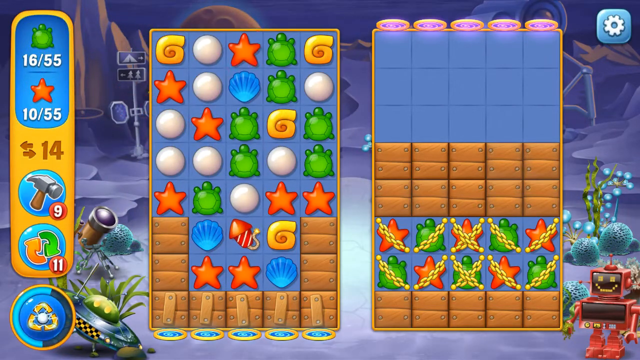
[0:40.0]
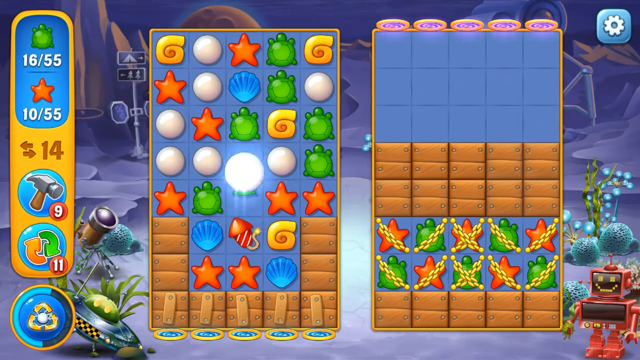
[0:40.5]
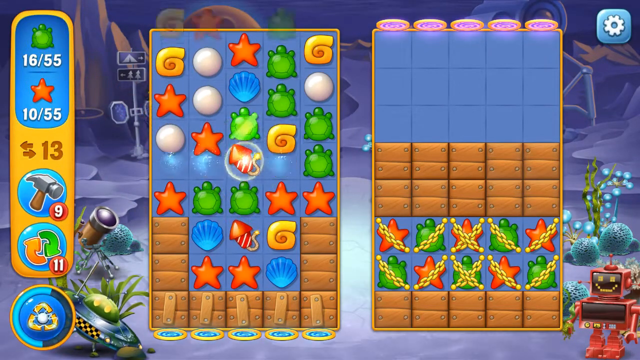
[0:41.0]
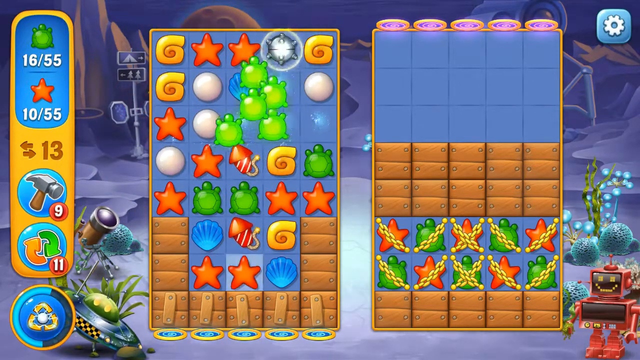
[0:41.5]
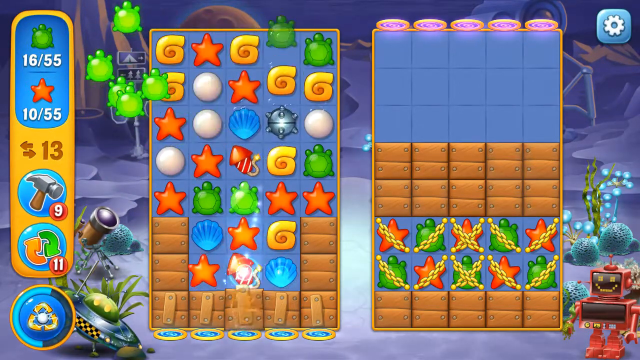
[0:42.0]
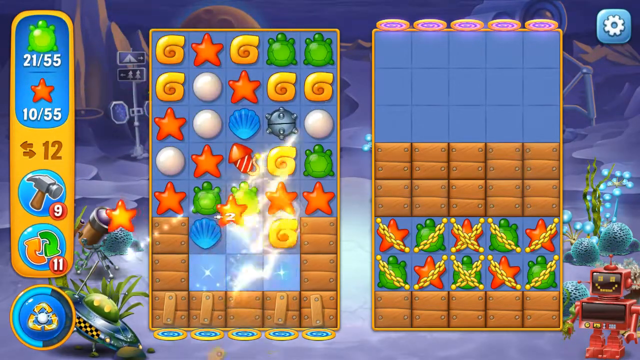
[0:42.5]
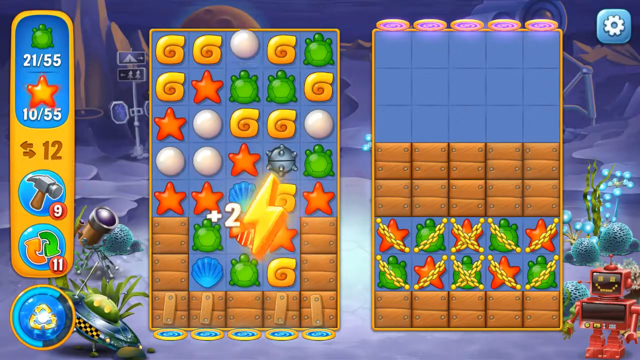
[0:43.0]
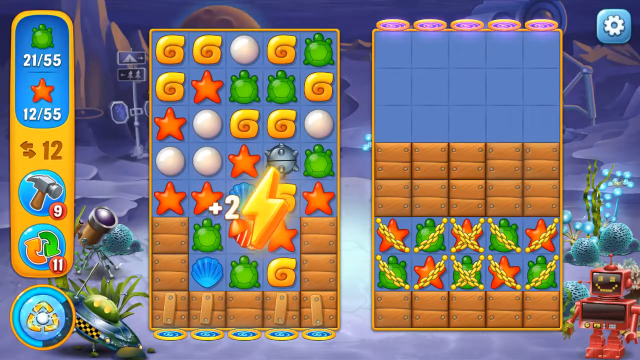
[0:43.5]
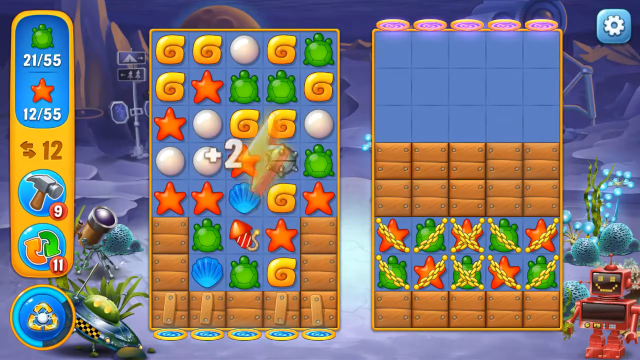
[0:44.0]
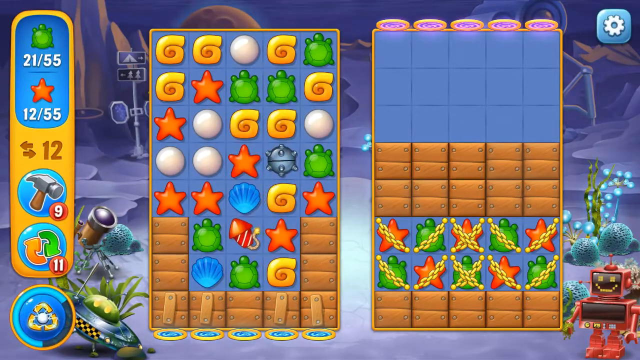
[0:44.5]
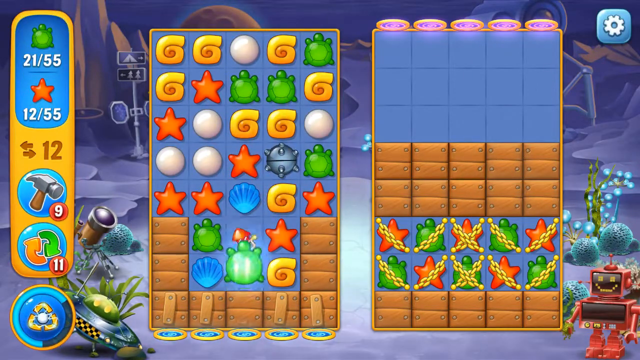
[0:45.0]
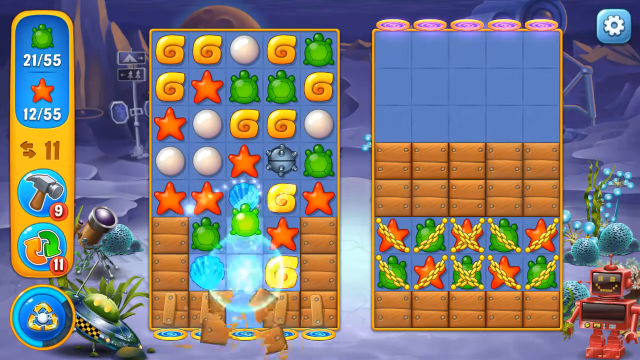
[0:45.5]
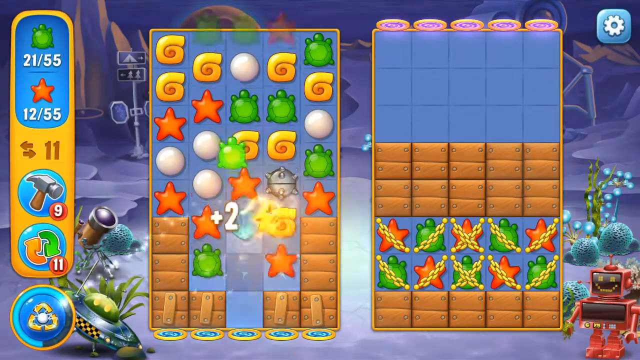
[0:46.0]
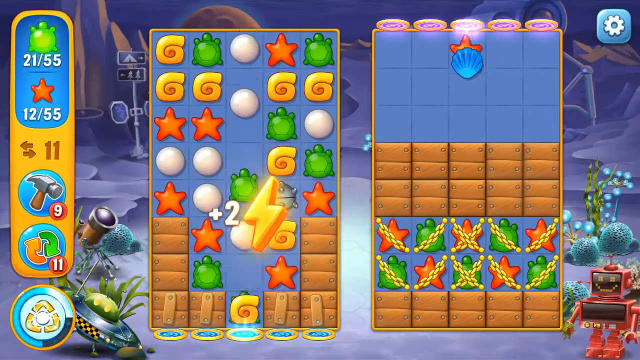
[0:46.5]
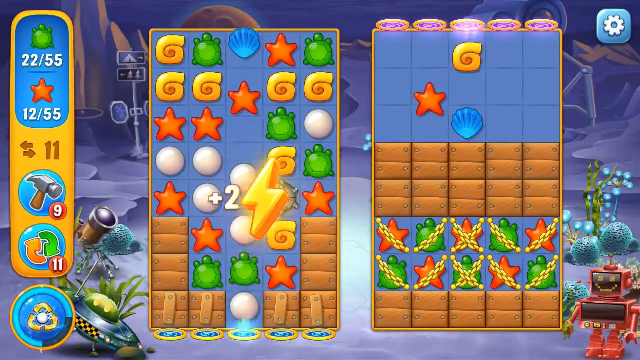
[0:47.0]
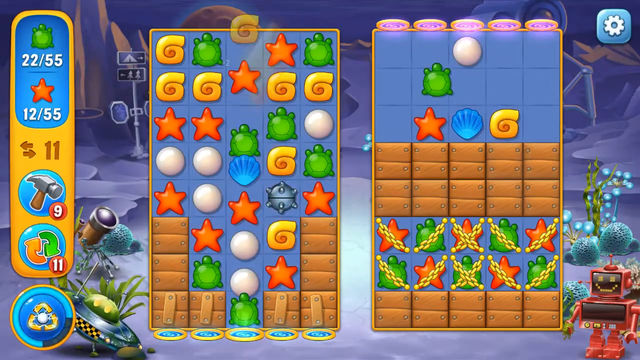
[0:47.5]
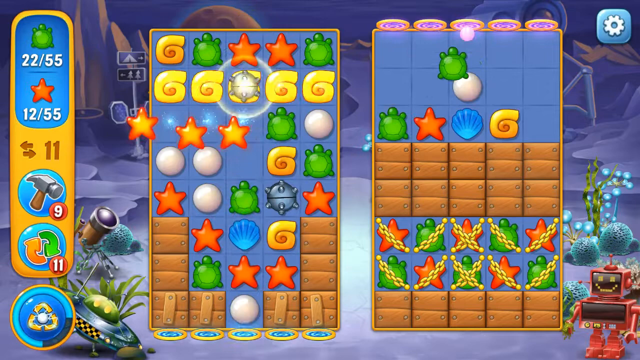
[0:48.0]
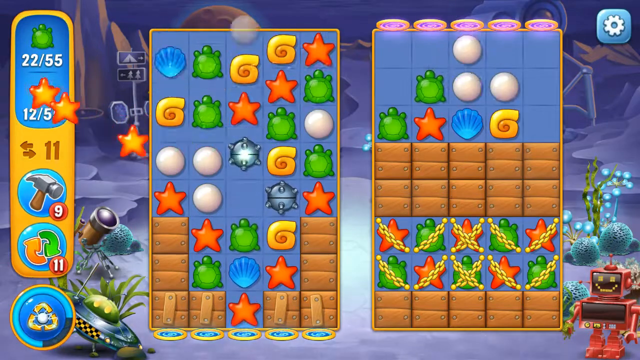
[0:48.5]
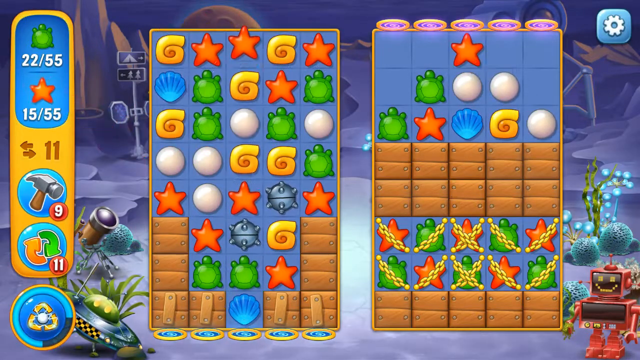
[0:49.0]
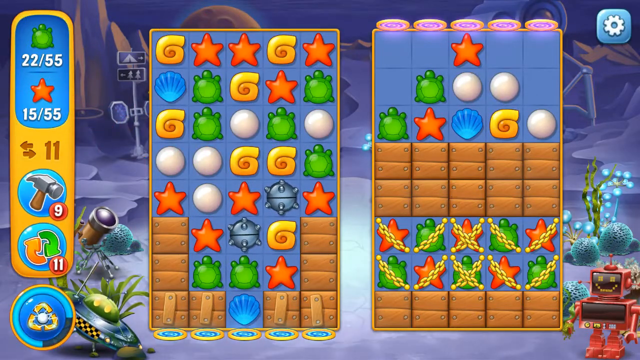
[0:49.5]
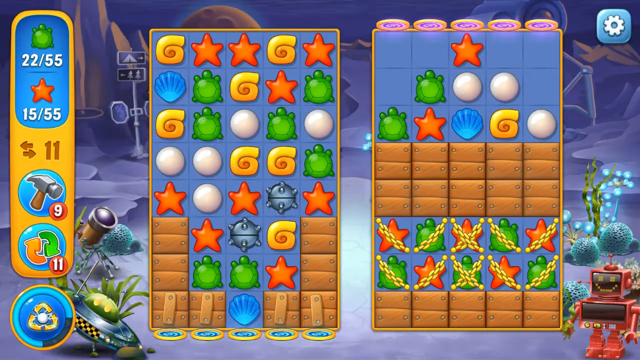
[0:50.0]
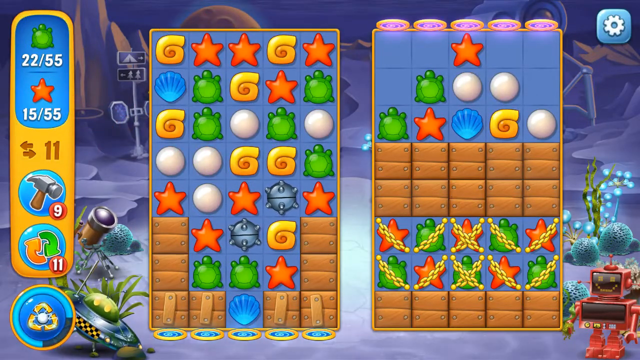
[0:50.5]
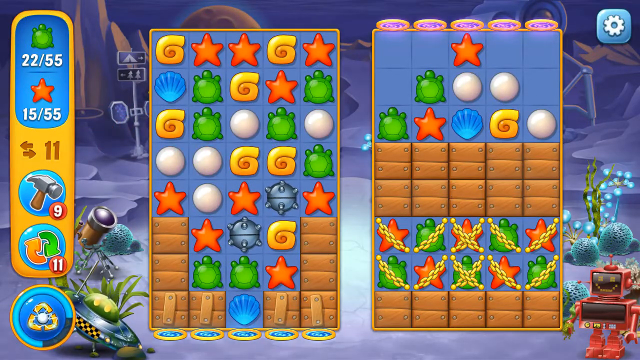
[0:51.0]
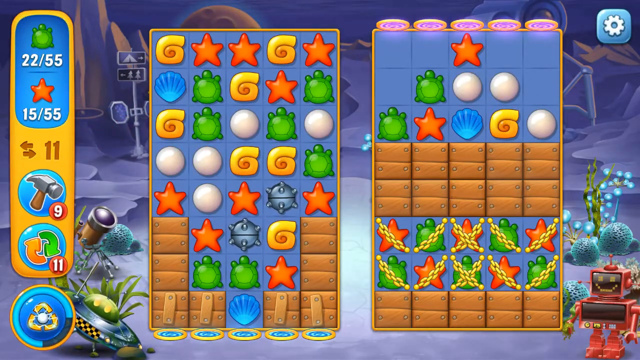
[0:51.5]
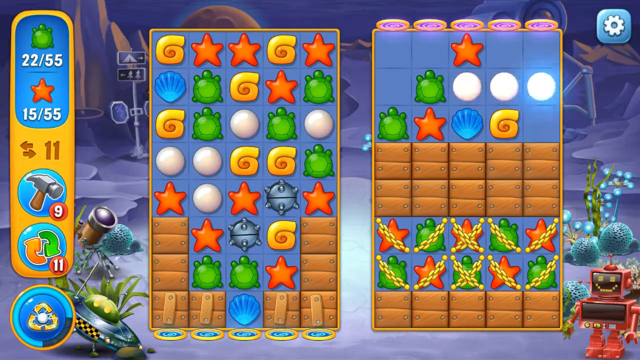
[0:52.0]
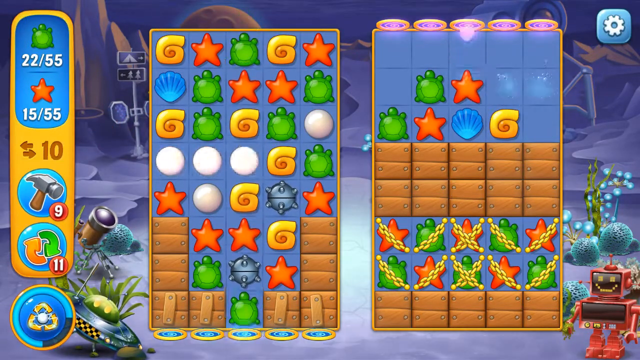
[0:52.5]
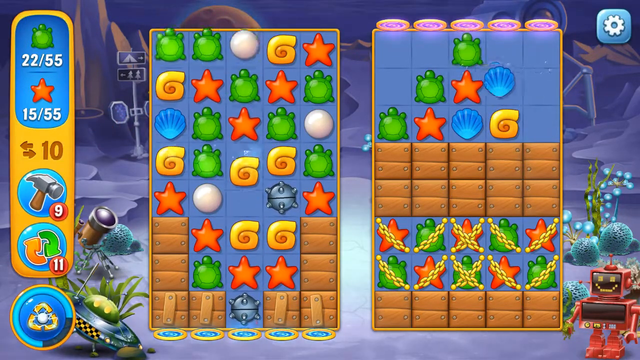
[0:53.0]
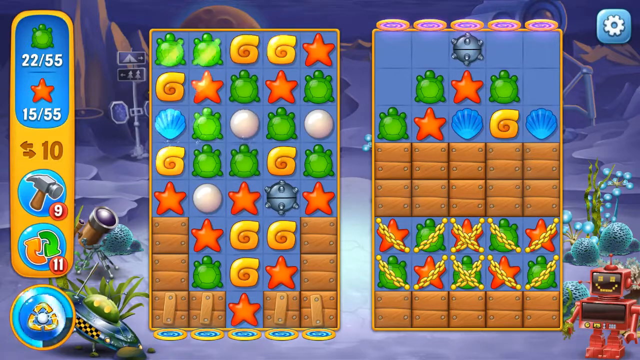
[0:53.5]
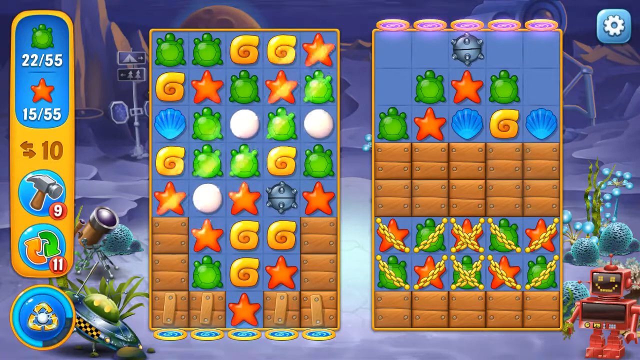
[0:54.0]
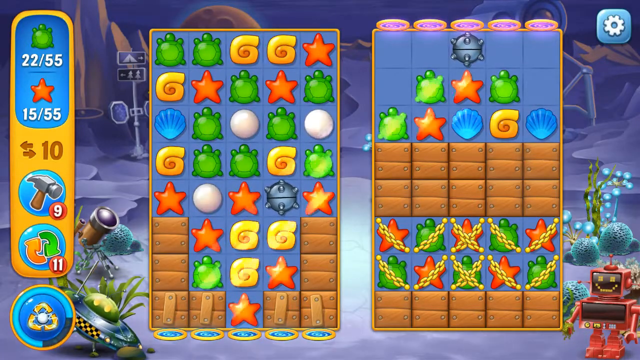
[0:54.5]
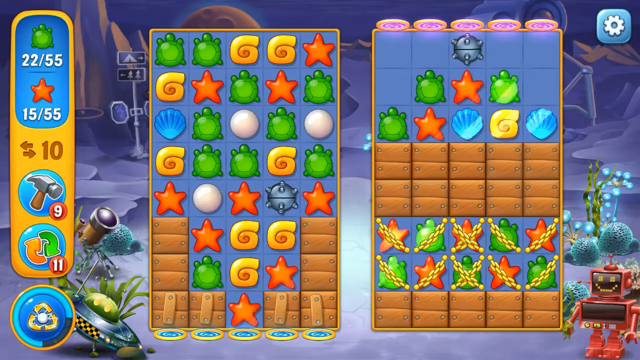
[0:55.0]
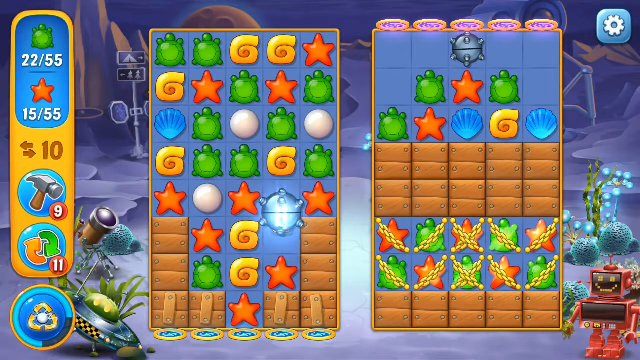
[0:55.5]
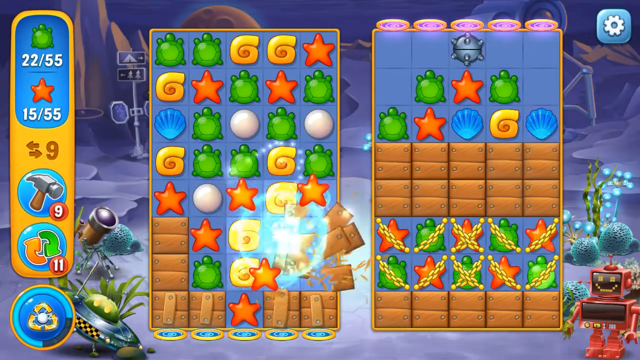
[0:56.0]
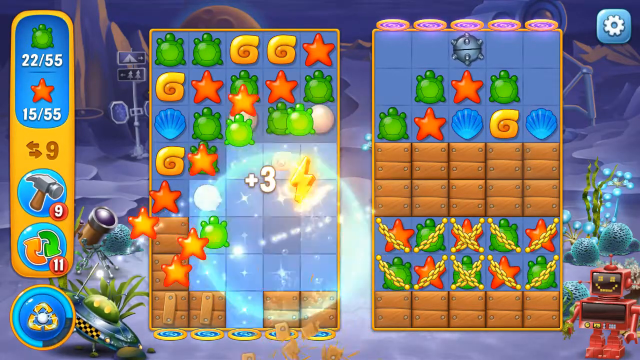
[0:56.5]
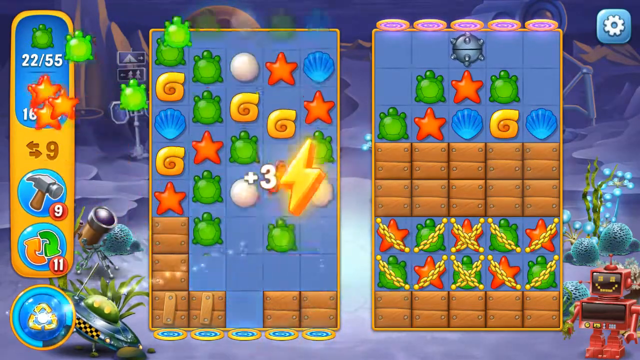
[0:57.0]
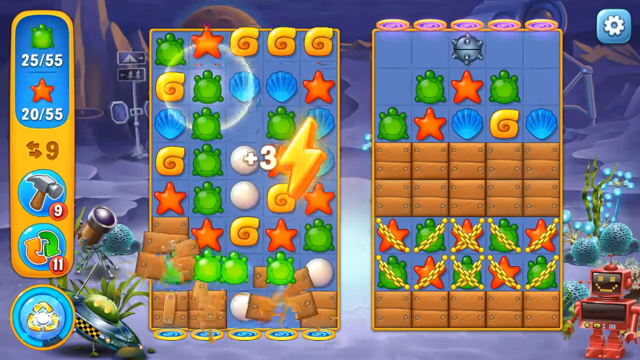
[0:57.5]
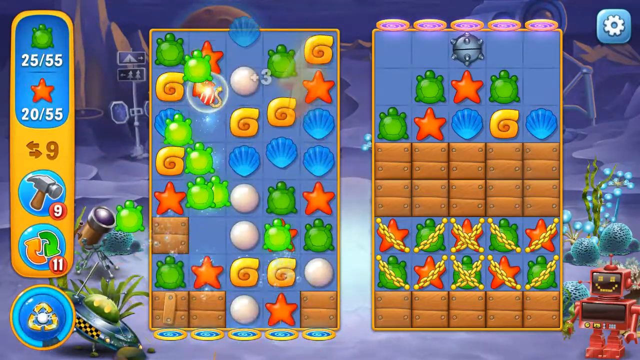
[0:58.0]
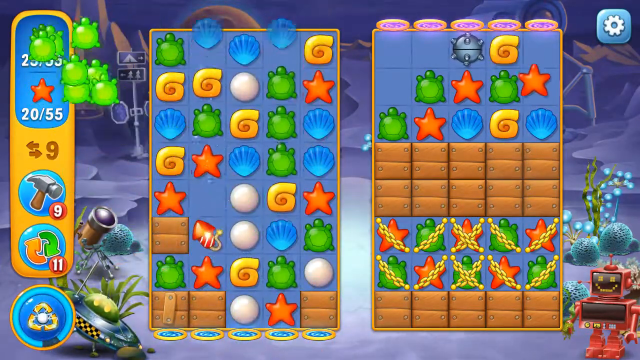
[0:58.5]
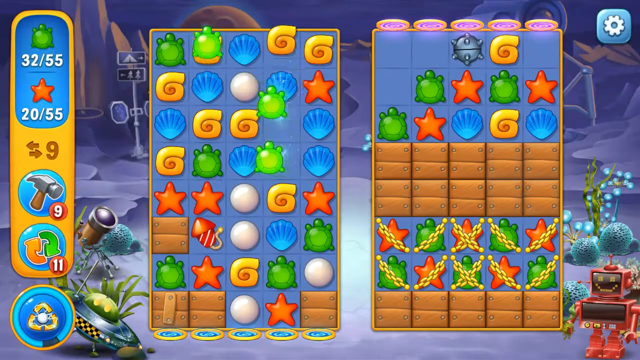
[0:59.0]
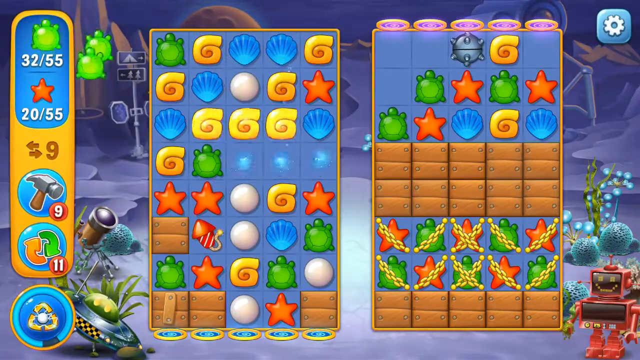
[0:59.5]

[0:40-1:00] The game board holds a bunch of different little shapes: green turtles, pearls, starfish and shells, plus a little red bomb. On the right, a bunch of turtles and starfish have chains on them. Settings on the left side show 16 of 55 turtles acquired and 10 out of 55 starfish, with 14 moves left, nine hammers and 11 shuffles. The player makes moves, acquiring turtles and stars, and text saying "+2" appears for a bolt as they play. Some of the pieces move over to the other side of the board, and the player begins making moves there. The count reaches 22 of 55 turtles and 15 of 55 stars, and they quickly acquire more turtles and stars.